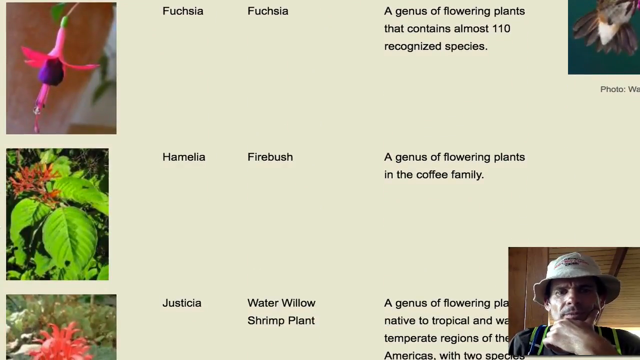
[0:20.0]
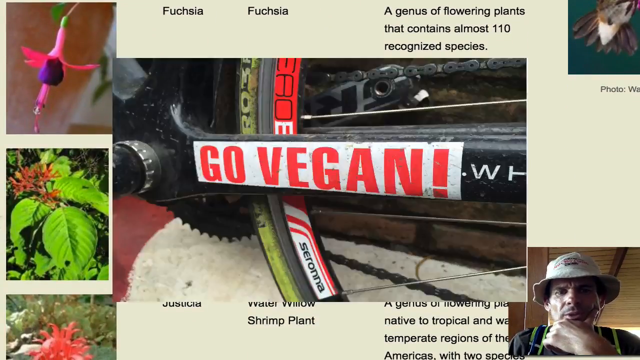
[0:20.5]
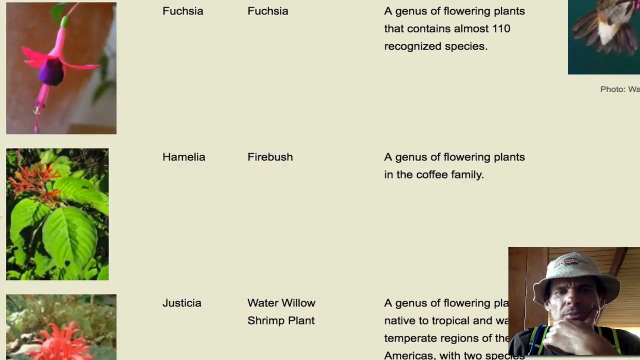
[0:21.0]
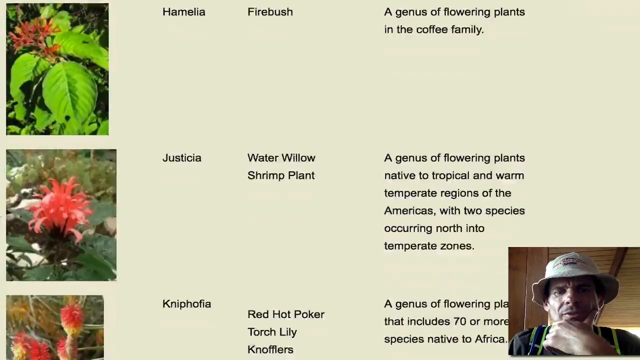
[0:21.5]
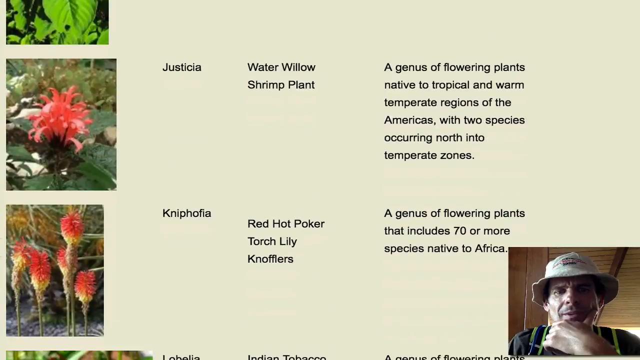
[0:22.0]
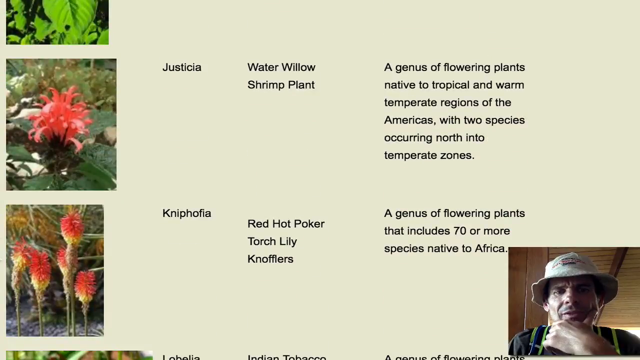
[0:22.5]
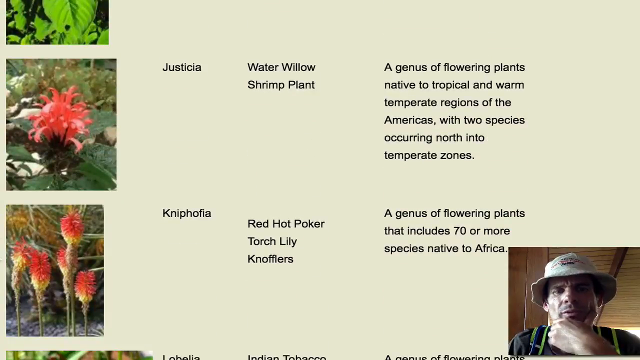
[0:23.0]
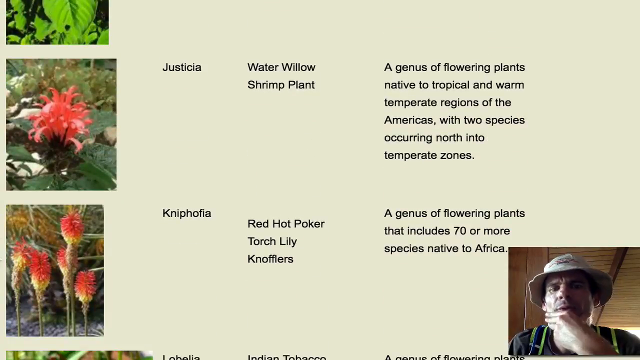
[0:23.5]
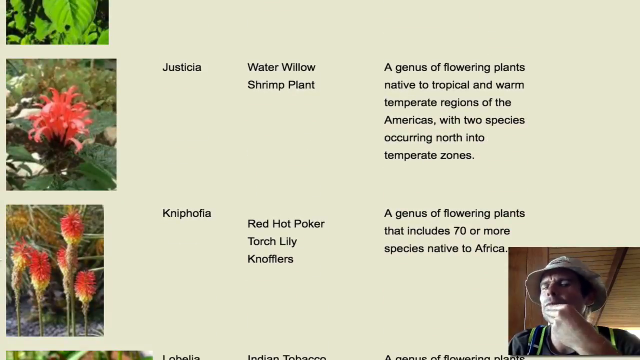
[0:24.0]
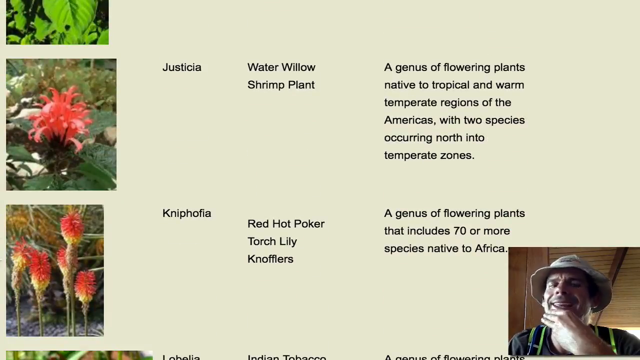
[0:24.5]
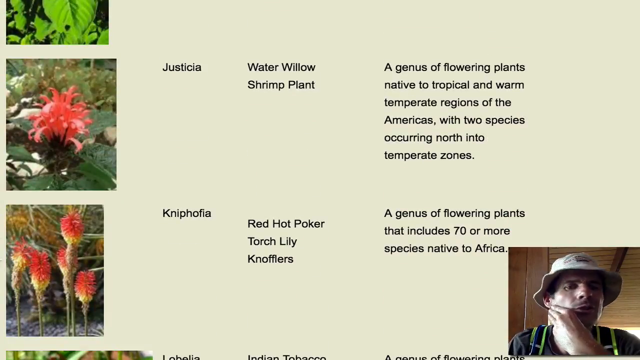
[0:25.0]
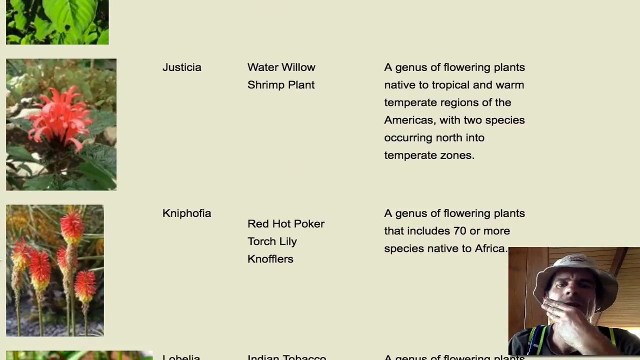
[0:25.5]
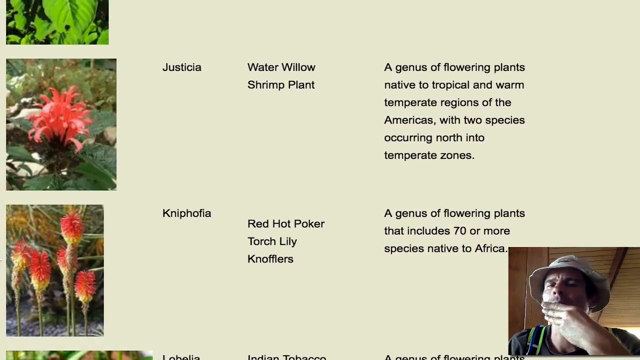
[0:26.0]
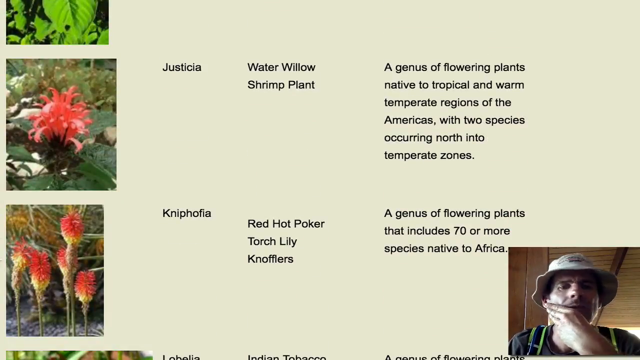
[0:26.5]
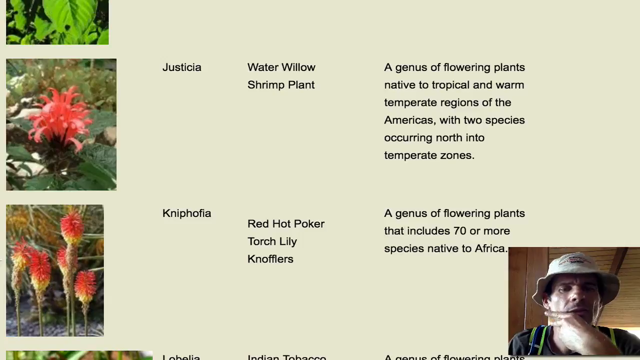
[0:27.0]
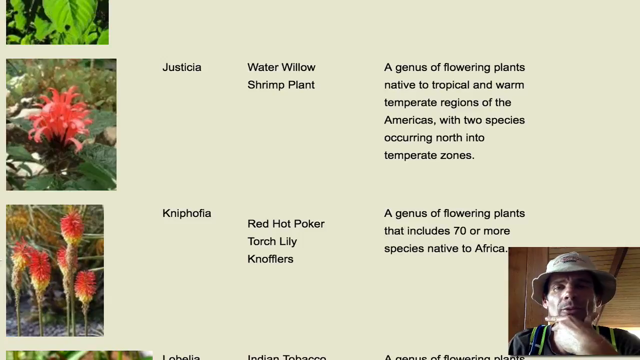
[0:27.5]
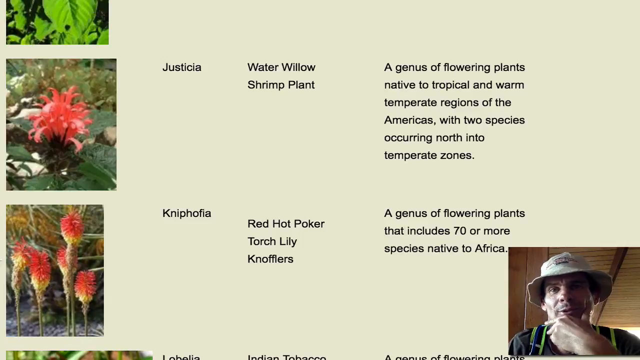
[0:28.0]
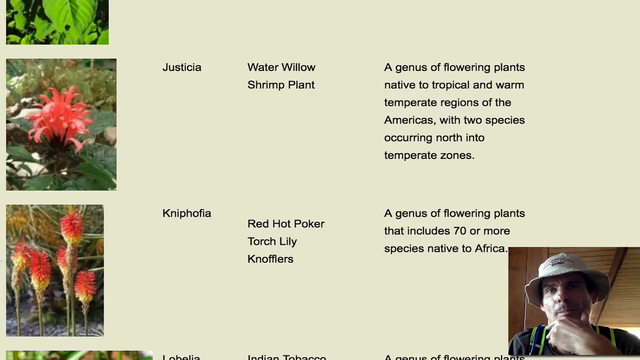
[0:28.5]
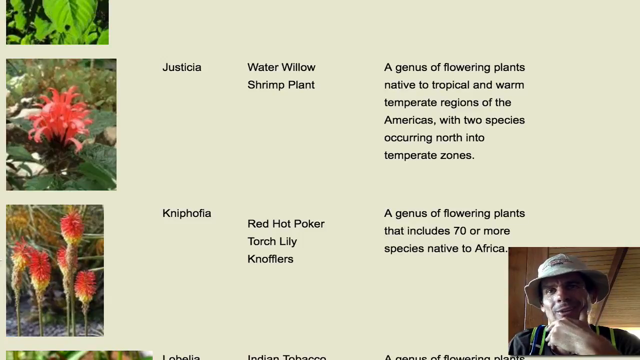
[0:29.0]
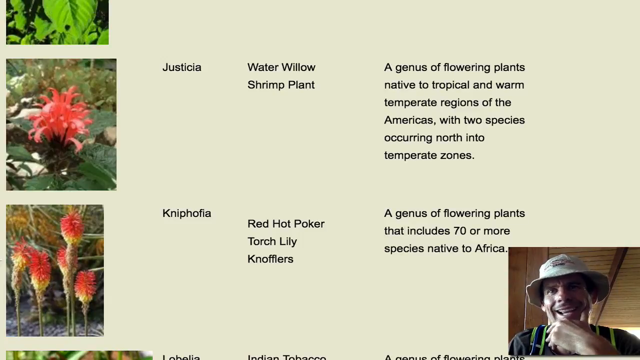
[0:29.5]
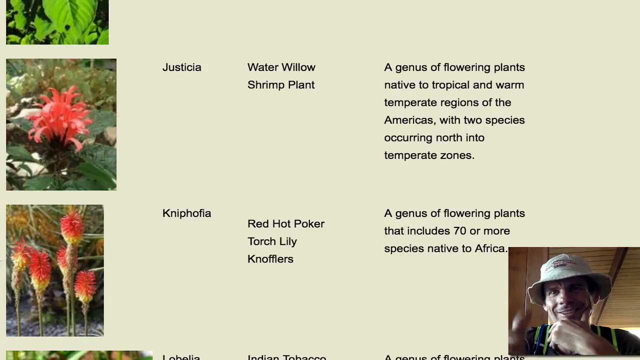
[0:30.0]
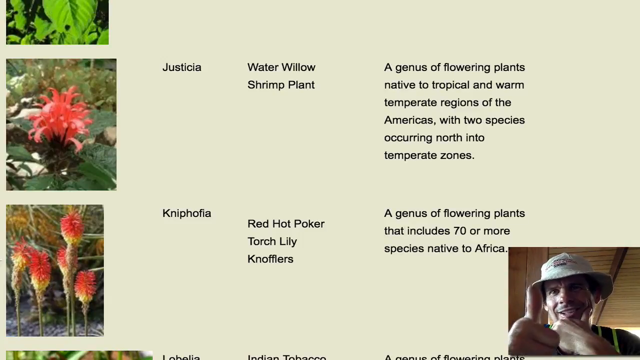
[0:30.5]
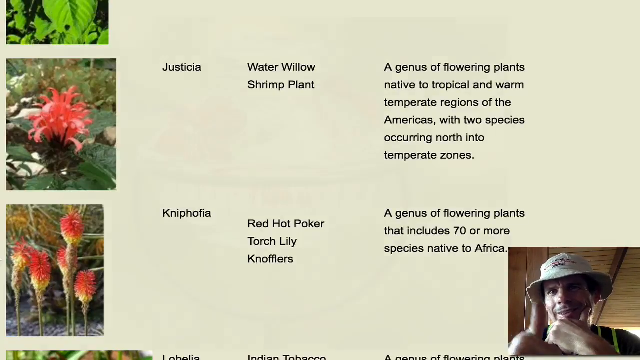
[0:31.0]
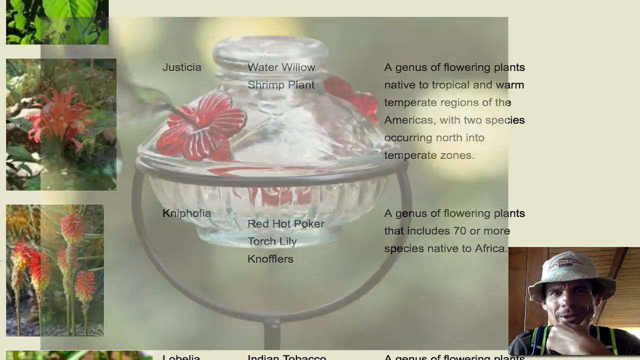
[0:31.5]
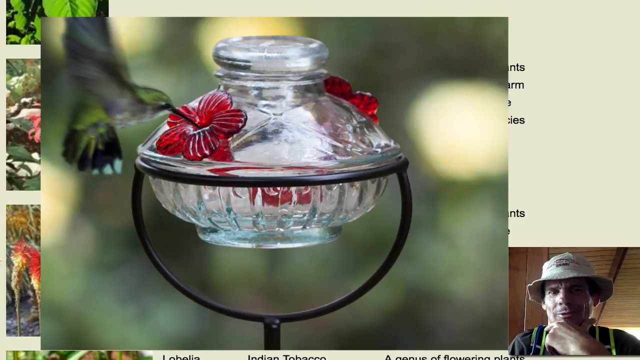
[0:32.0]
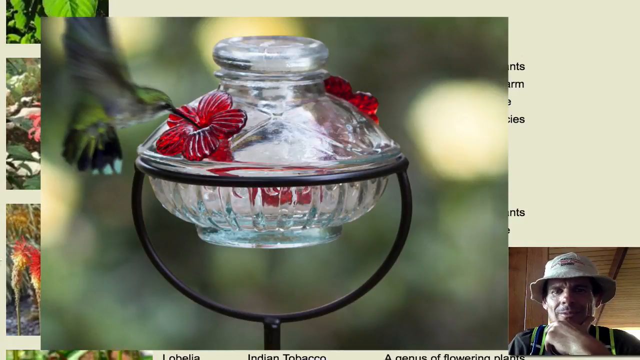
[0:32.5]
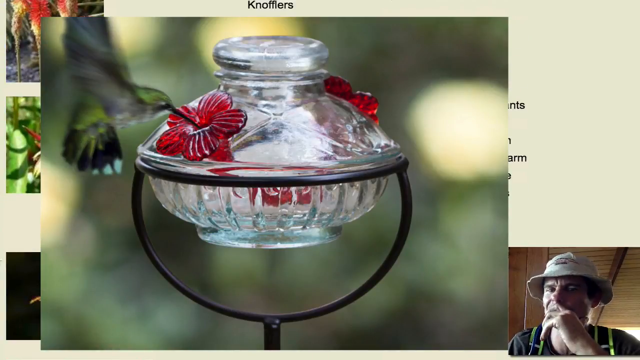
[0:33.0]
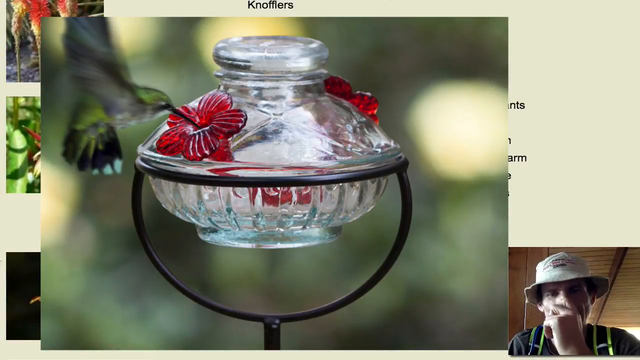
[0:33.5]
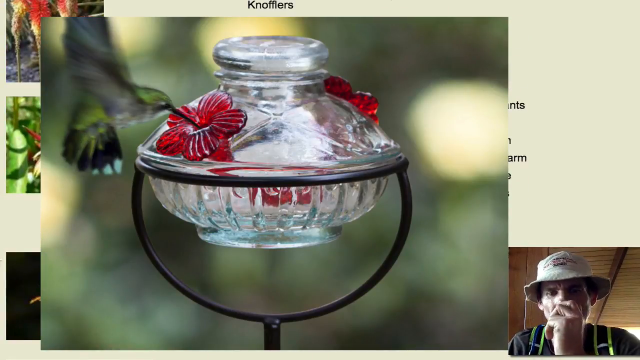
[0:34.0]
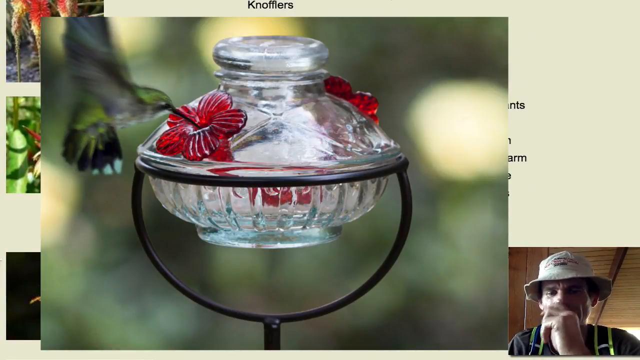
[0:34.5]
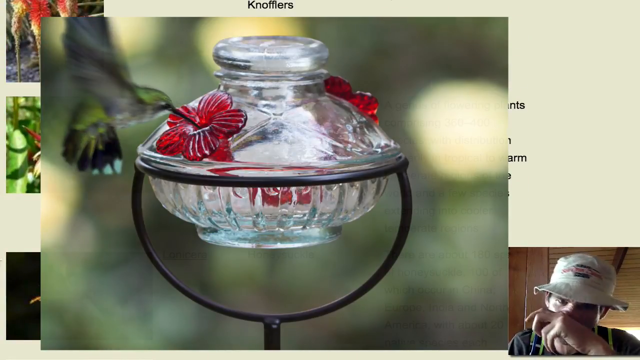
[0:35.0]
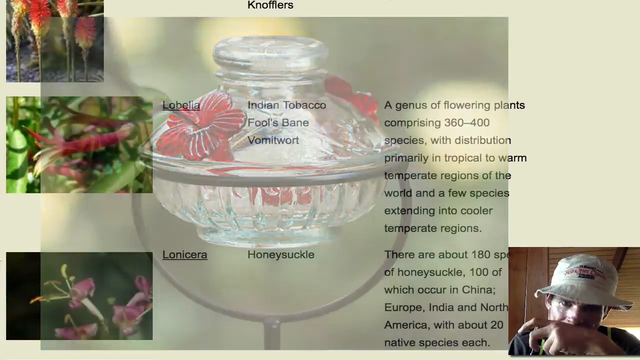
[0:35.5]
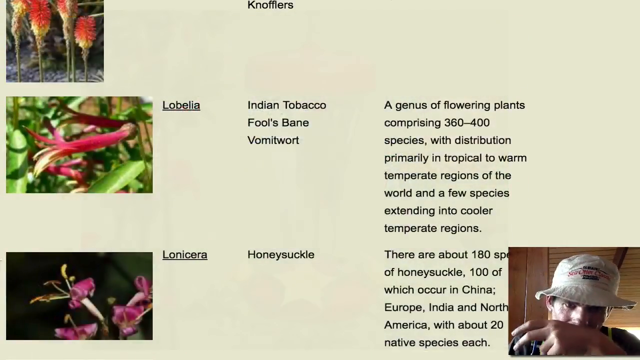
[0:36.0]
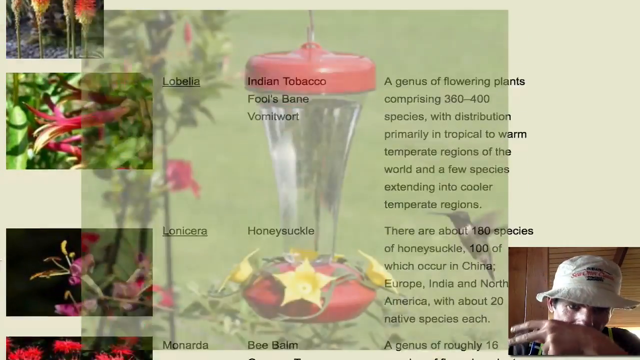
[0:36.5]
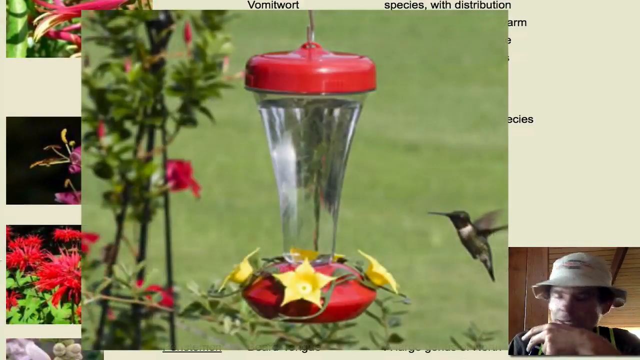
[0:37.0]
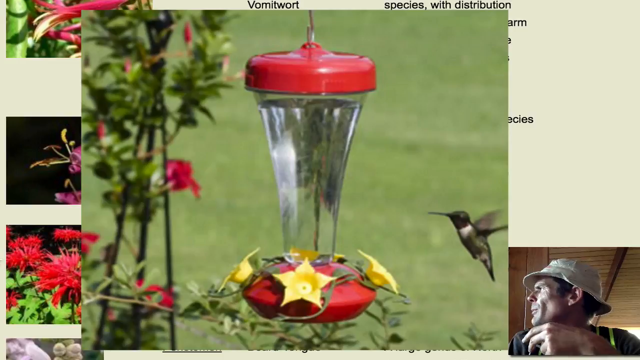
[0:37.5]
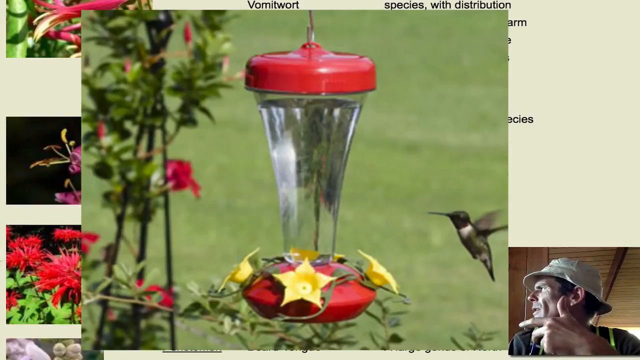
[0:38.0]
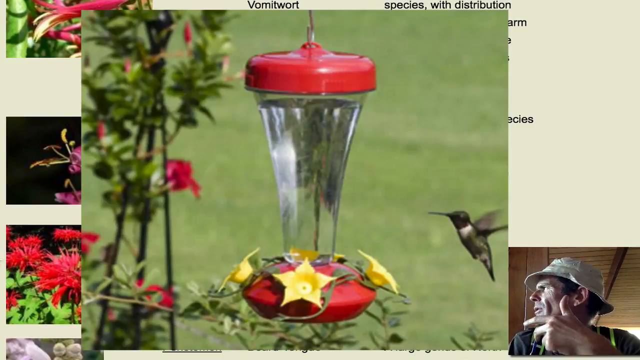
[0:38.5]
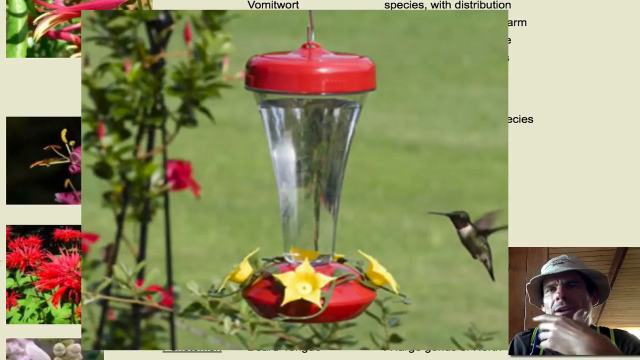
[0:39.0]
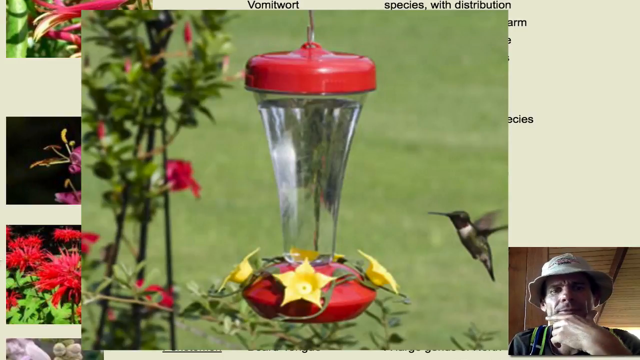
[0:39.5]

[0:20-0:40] The man apparently moves to Justicia, a red flower with green leaves below it, listed as "water willow, shrimp plant," with an explanation that seems to read "a genus of flowering plants native to tropical and warm temperate regions of the Americas." Next comes Nephothia, which looks a bit spiky with red on all of them, listed as "red-hot poker" and "a genus of flowering plants that include 70 or more species native to Africa." The man at the bottom rubs his jaw front and back, then gives a thumbs up. The page moves on to something that looks like a teacup, then changes to the next page. It apparently scrolls up a bit and shows Lobelia, which looks a bit red, listed with "Indian tobacco" and "a genus of flowering plants comprising 364 species," with a distribution primarily in tropical to warm temperate regions of the world and a few species extending to cooler temperate regions. It then moves on to Melonicera, honeysuckle, with about 180, but the man's picture covers it. He taps his nose and moves on to something that looks like a lamp, which appears to have water inside. The man keeps his hands on his jaw the whole time.